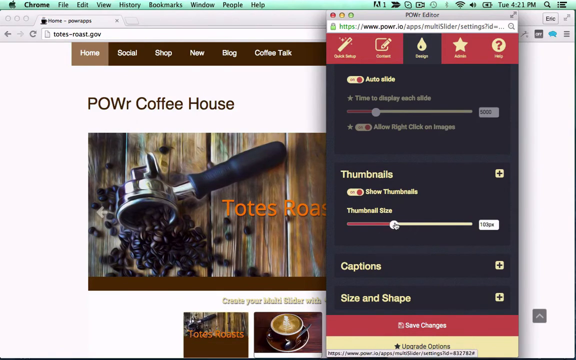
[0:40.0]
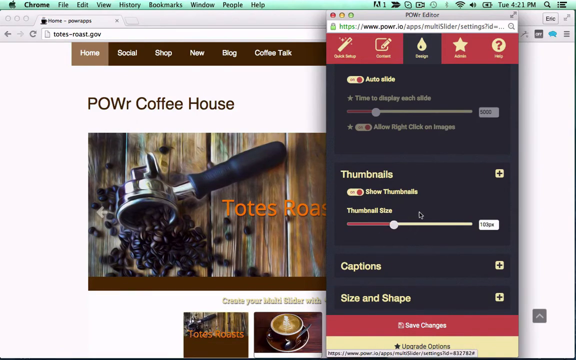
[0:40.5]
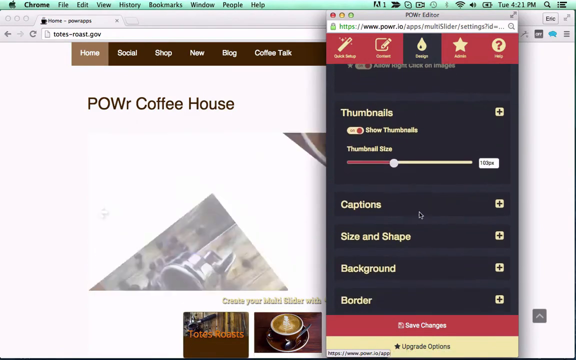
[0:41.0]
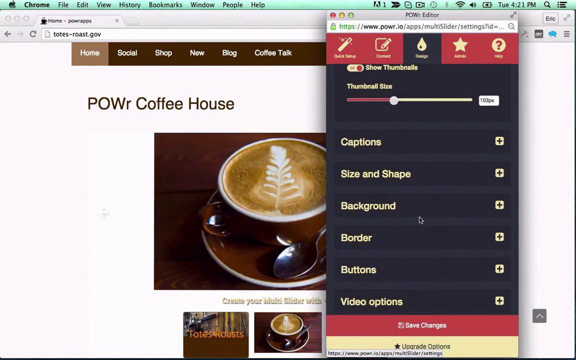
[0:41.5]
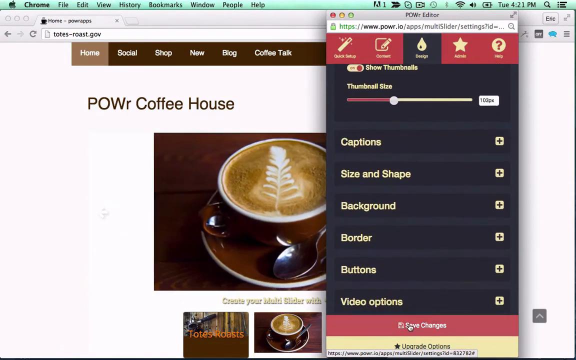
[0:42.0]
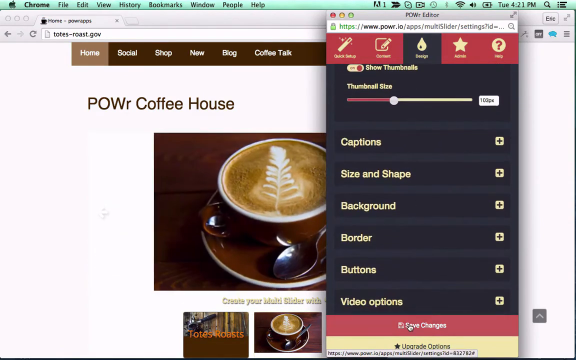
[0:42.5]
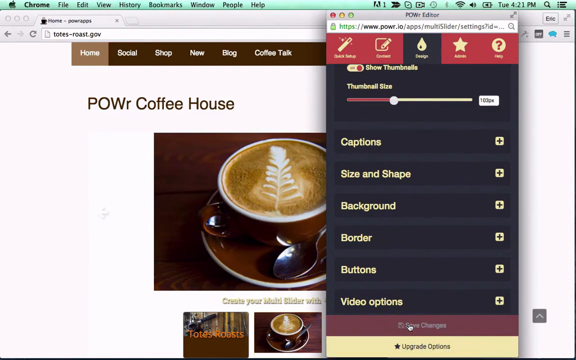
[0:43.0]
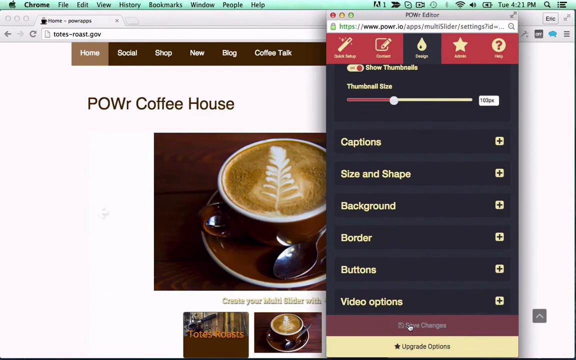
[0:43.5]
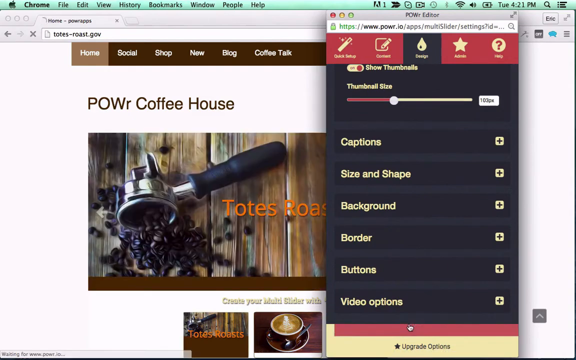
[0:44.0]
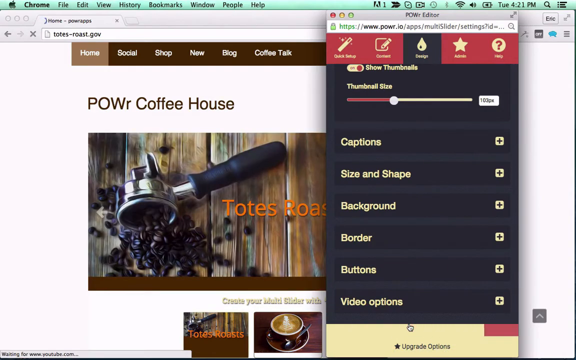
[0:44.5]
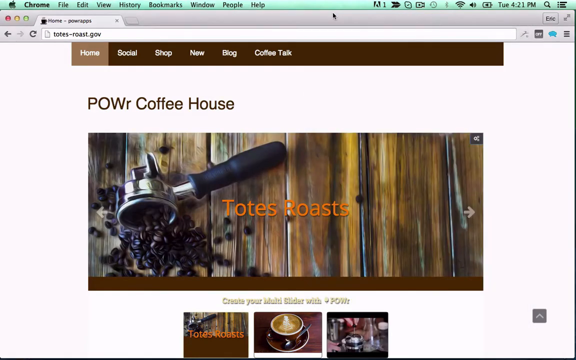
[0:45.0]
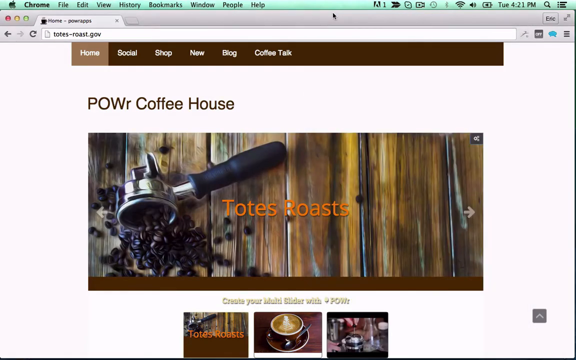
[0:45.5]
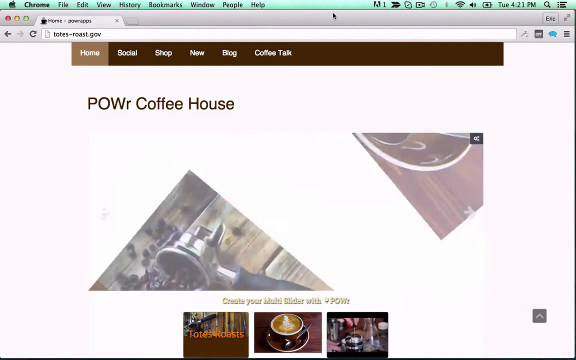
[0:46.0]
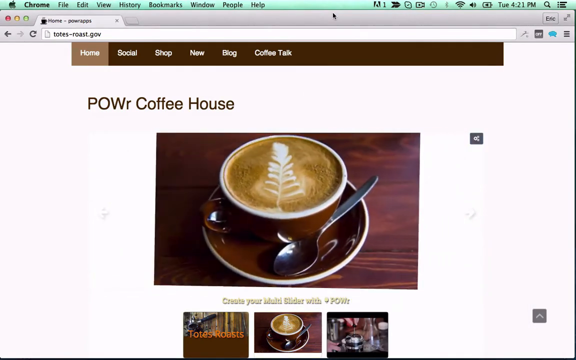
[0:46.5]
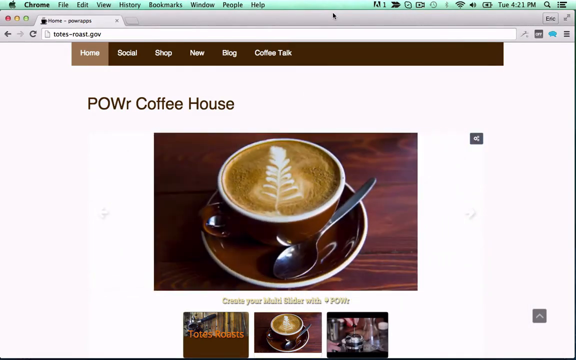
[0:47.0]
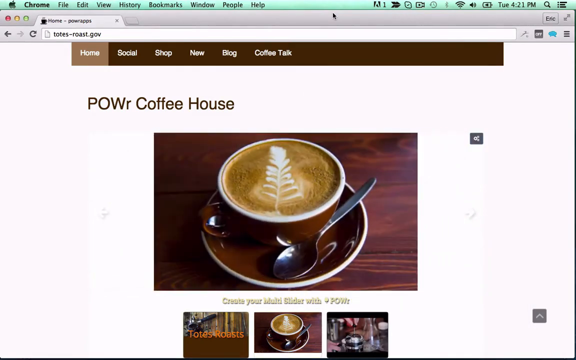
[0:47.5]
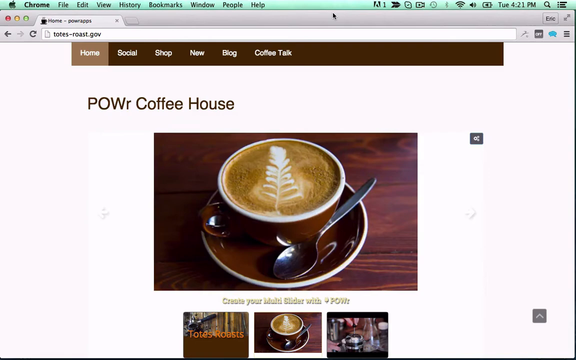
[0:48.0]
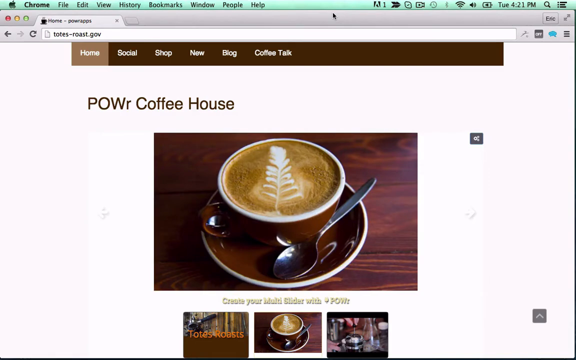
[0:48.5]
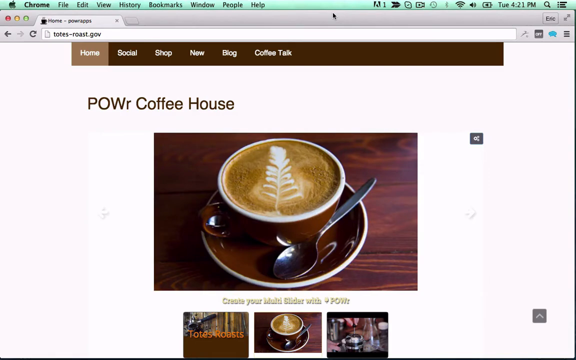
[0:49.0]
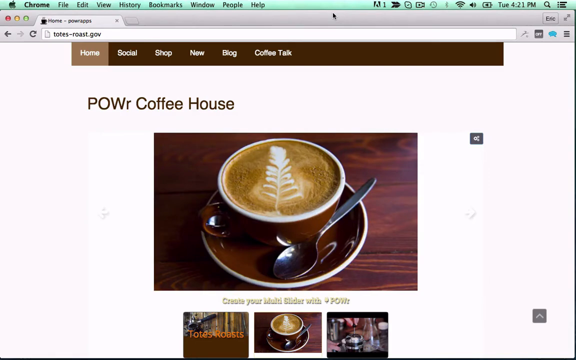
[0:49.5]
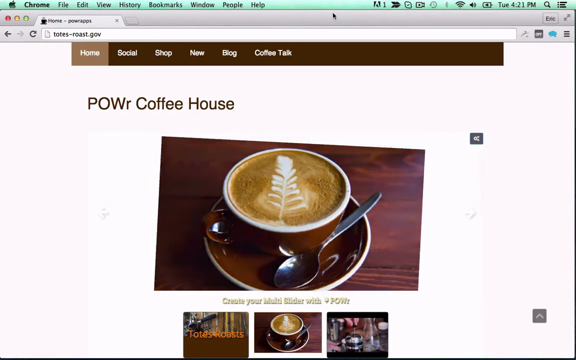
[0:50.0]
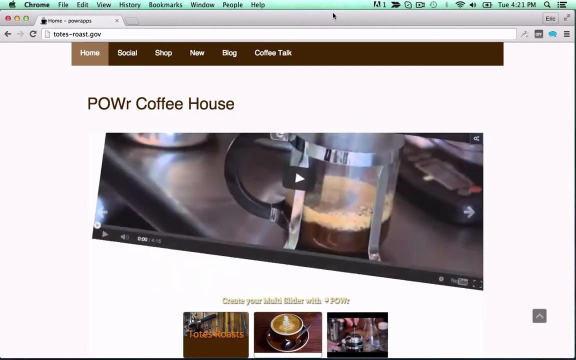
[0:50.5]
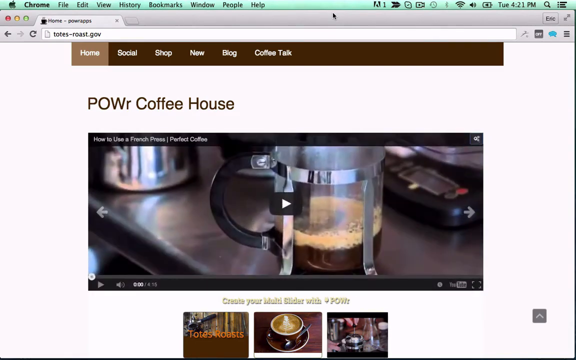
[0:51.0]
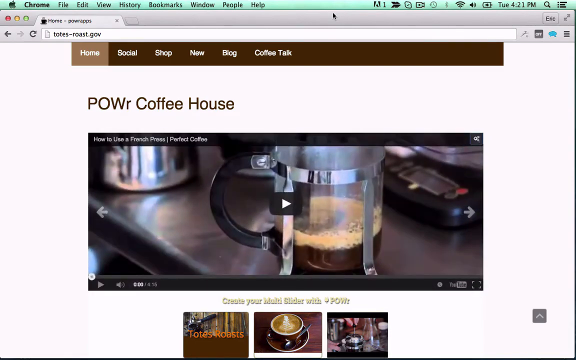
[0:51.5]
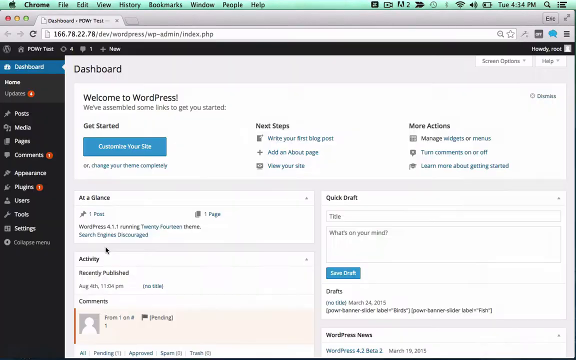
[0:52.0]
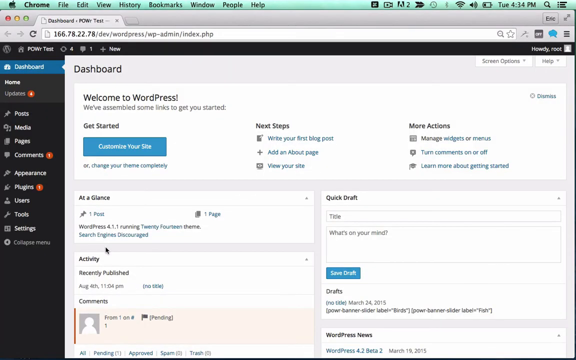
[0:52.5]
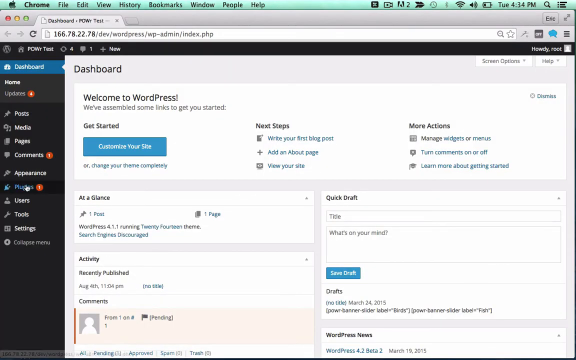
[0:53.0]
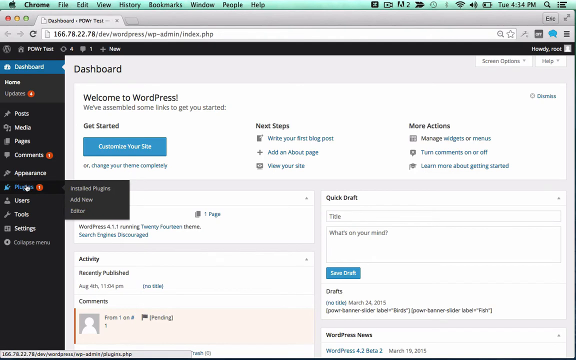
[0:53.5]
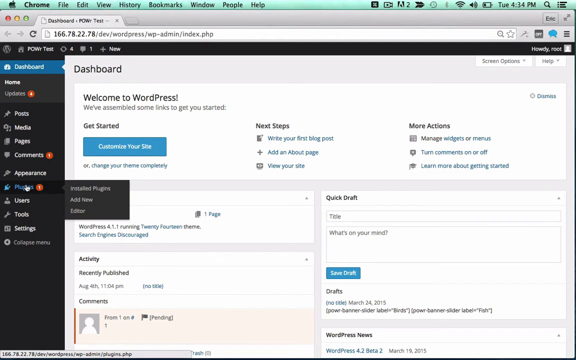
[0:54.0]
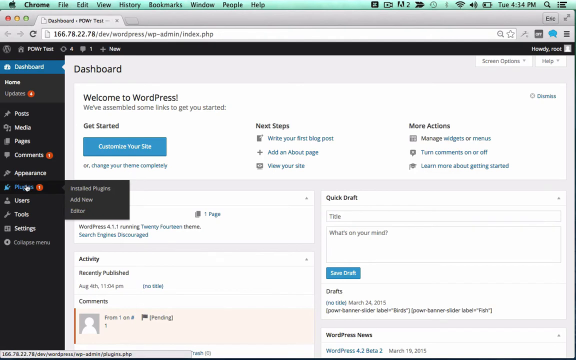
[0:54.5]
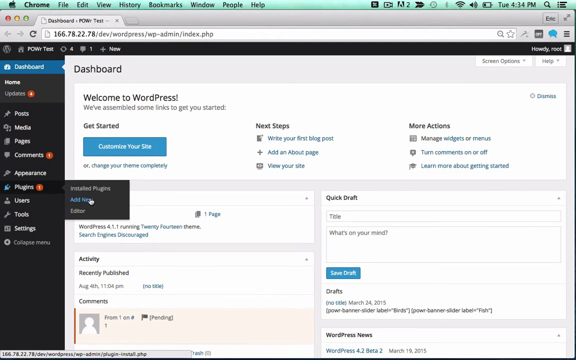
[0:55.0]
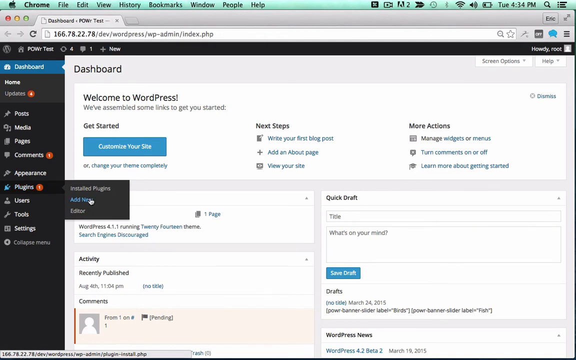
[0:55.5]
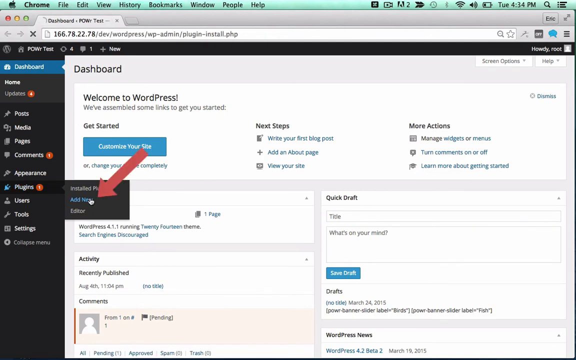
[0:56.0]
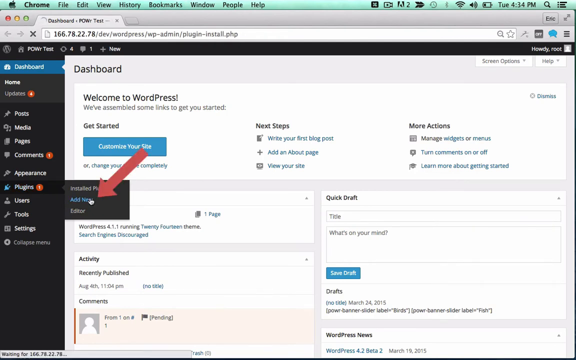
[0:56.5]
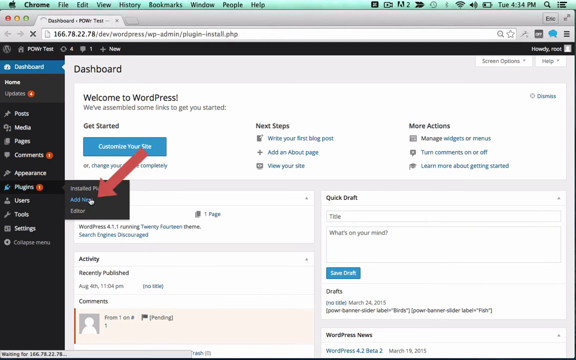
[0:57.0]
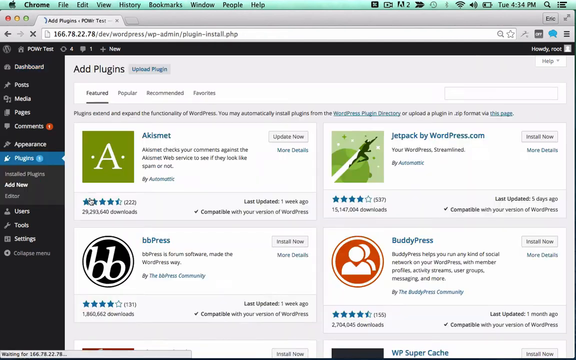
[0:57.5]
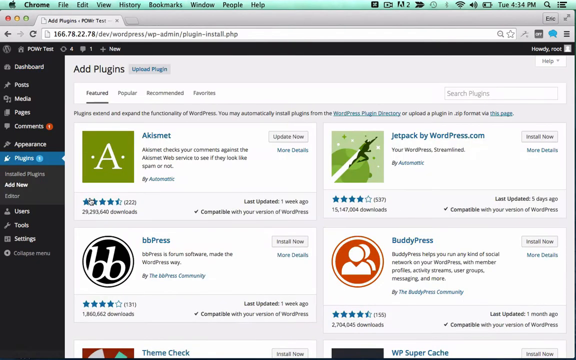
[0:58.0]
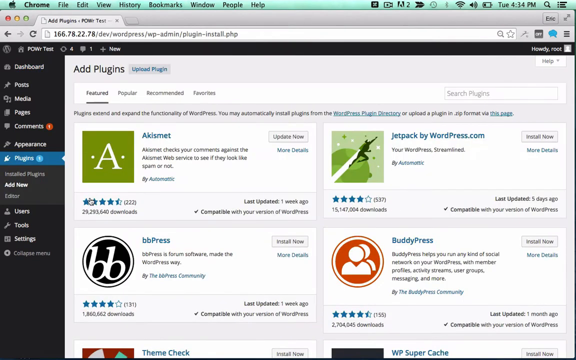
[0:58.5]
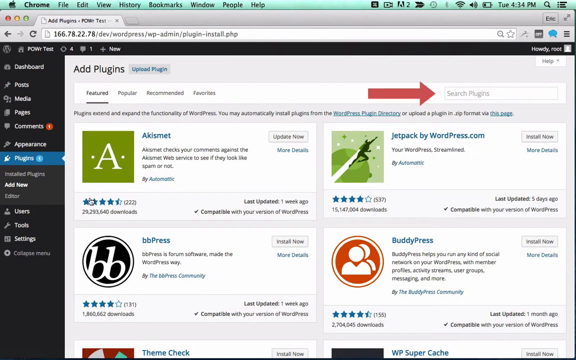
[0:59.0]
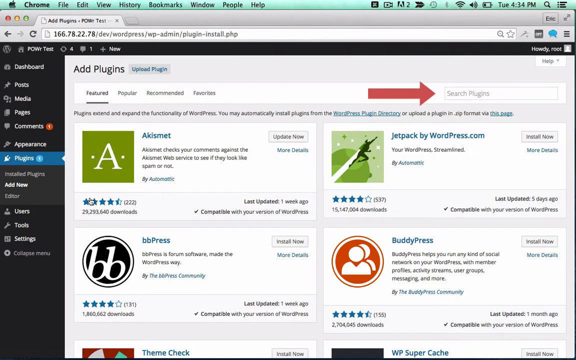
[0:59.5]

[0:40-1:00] A background relates to the POWr coffee house, and the picture on the back is changed to one of some pottery. Cups with coffee in them appear, with a special design in the cream on top; one almost looks like maybe some pine trees. The pop-up in front then disappears; it has sections for captions, size and shape, background, border, buttons, and video options. Show thumbnails is turned on, and the thumbnail size is set to 100px. A coffee mug with fluffy coffee almost shaped like a tree comes up. Then part of a page appears, and a red arrow comes out, pointing to a section that says "add new" underneath "customize your size".